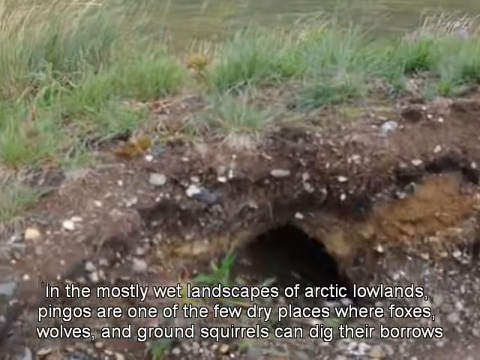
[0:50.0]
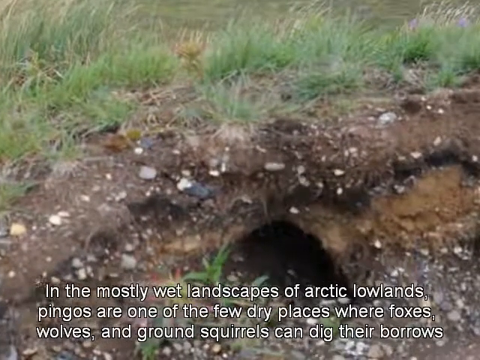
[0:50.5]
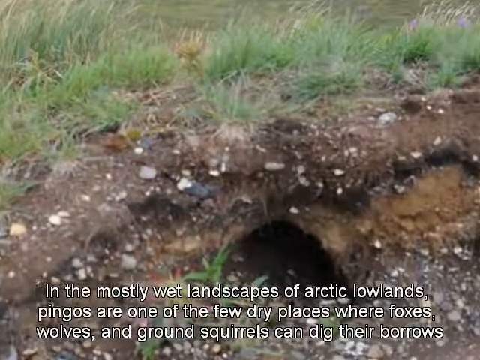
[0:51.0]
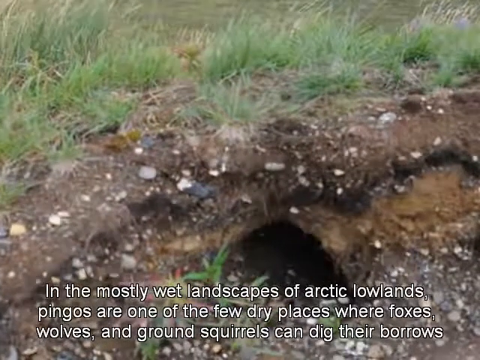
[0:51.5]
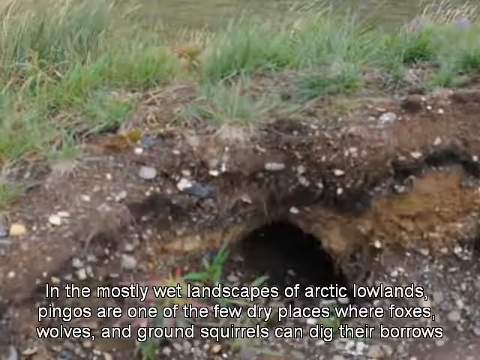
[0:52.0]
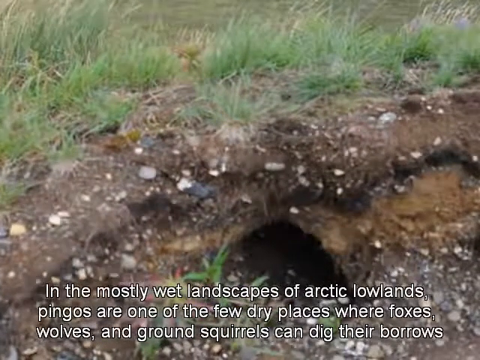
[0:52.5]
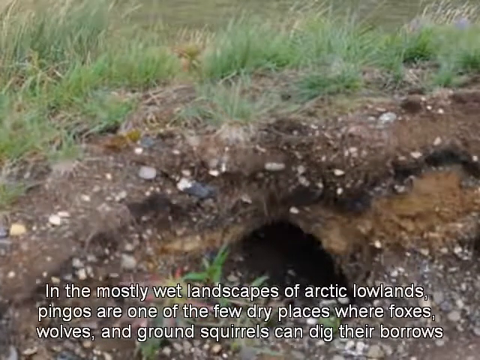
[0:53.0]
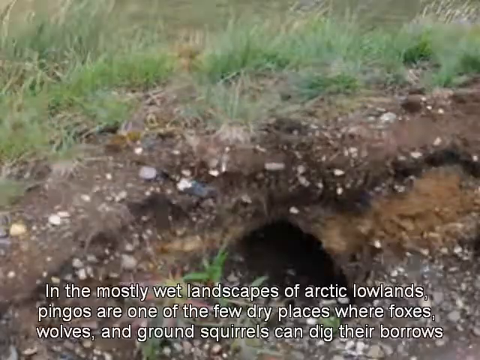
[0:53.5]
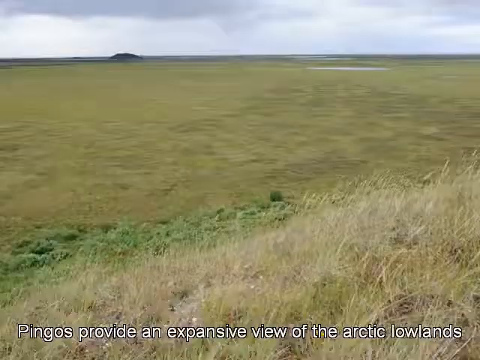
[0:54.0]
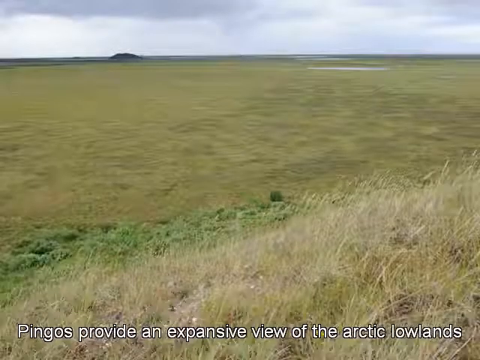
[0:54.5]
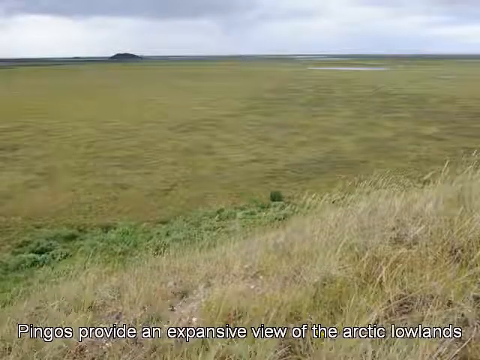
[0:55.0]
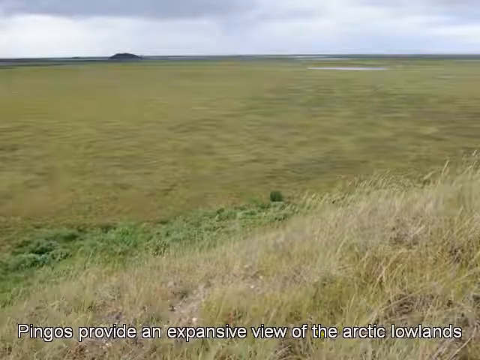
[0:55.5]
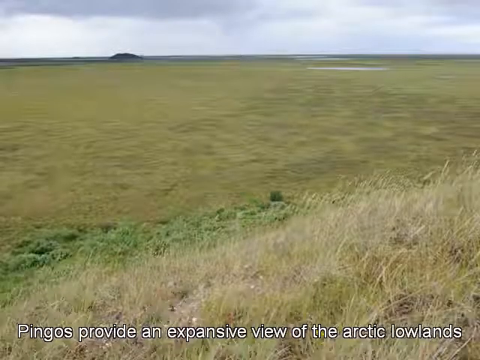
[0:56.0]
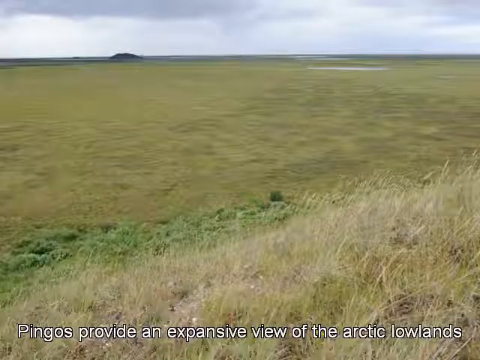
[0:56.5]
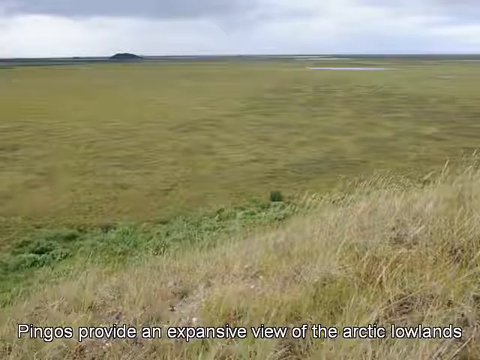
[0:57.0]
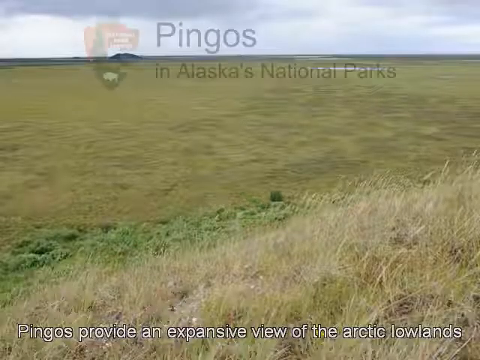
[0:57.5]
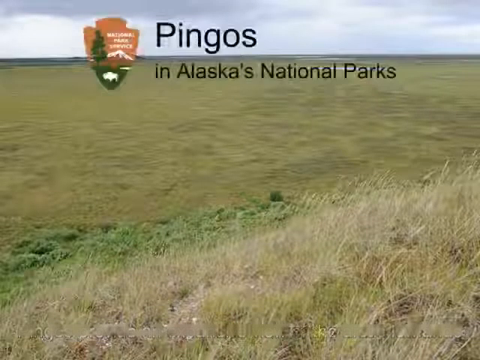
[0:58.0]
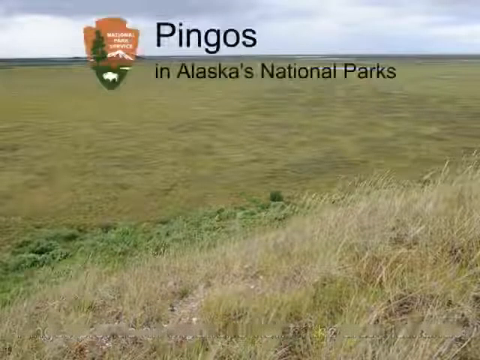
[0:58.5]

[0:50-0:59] White subtitles at the bottom of the screen read "In the mostly wet landscape of Arctic lowlands, pingos are one of the few dry places where foxes, wolves and ground squirrels can dig their burrows. Pingos provide an expansive view of the Arctic lowlands." An image of grass shows a burrow in the ground, followed by an image of an open green landscape, an expansive view of the National Park seen from on top of what is probably a pingo. The National Park Service badge appears again with the words "pingos in Alaska National Park" beside it, and the video ends on a black screen.